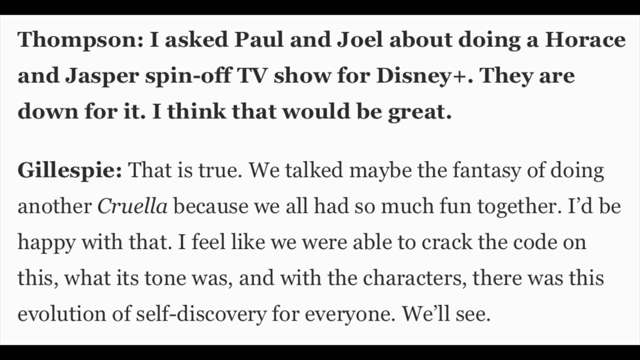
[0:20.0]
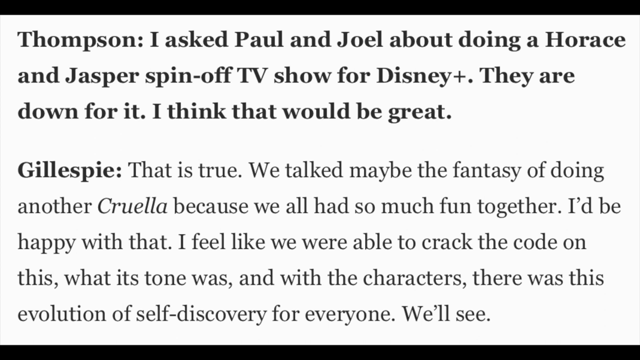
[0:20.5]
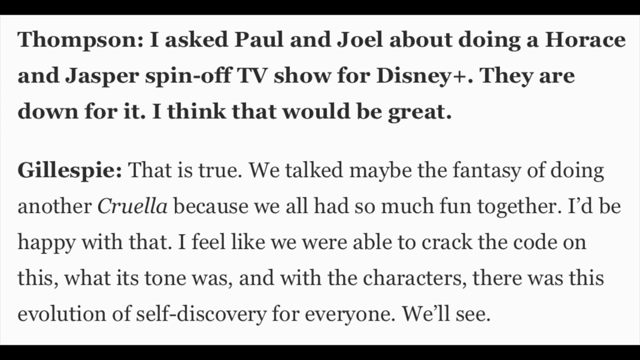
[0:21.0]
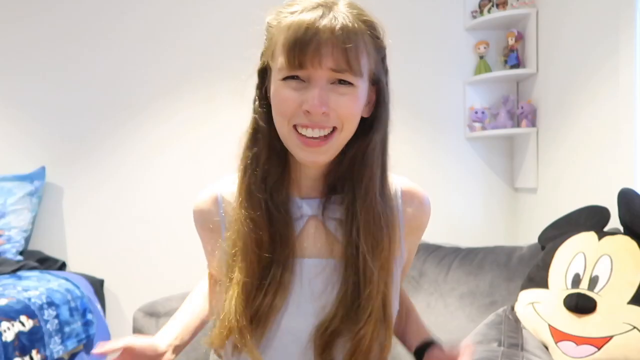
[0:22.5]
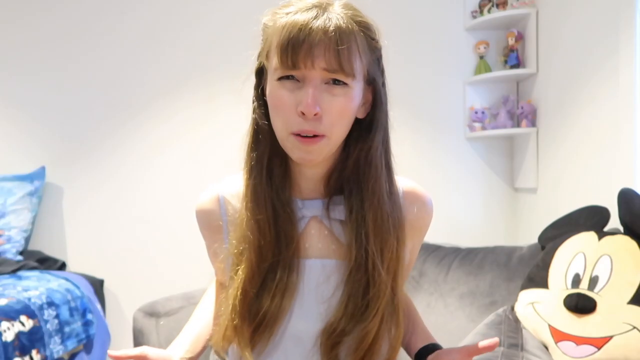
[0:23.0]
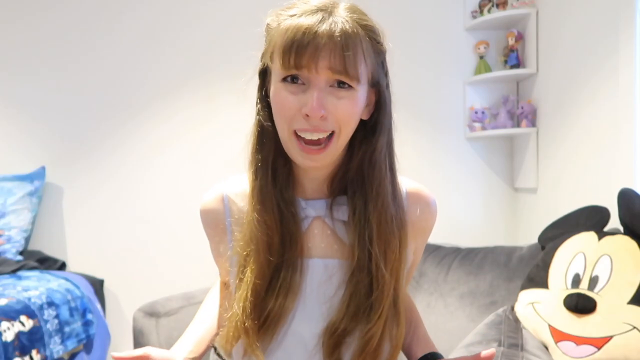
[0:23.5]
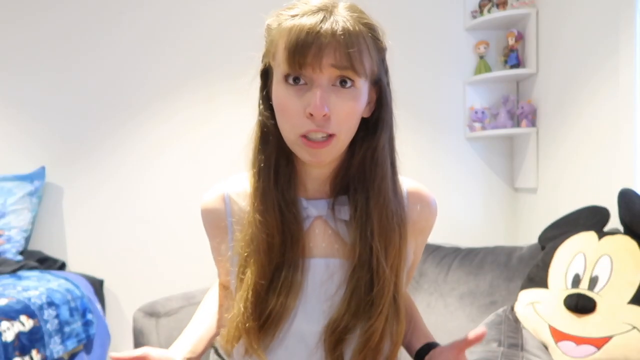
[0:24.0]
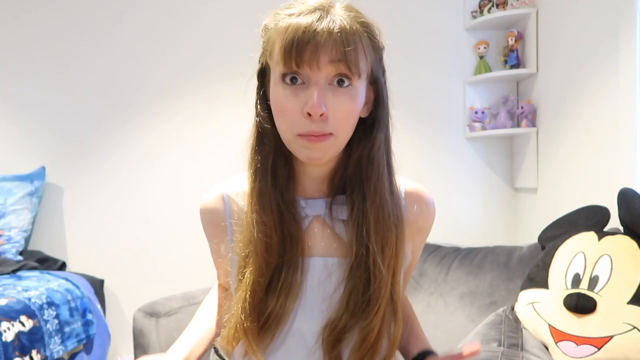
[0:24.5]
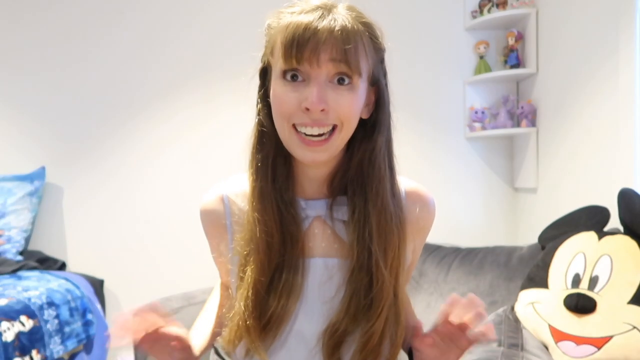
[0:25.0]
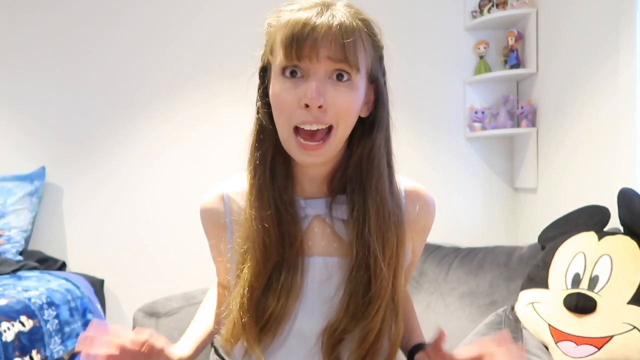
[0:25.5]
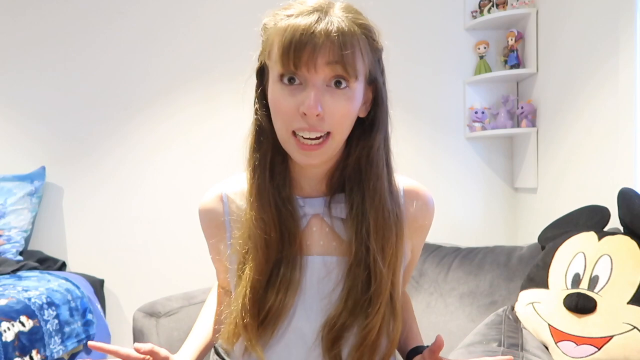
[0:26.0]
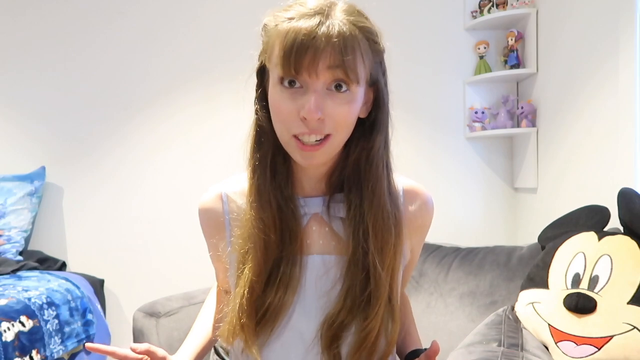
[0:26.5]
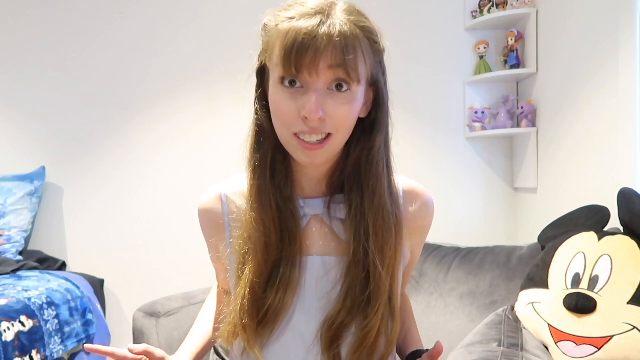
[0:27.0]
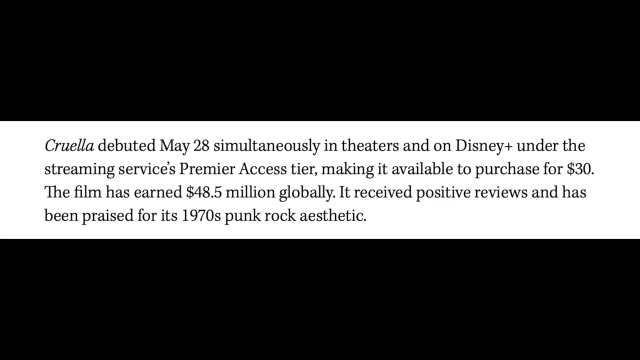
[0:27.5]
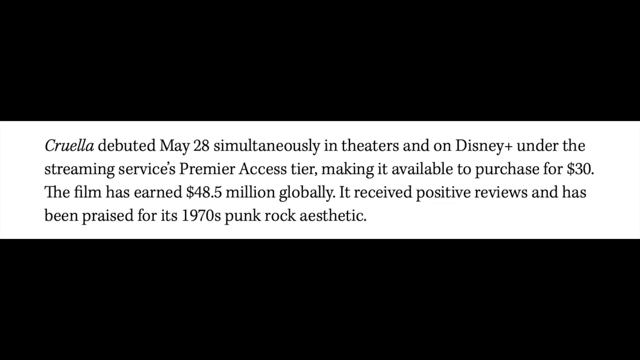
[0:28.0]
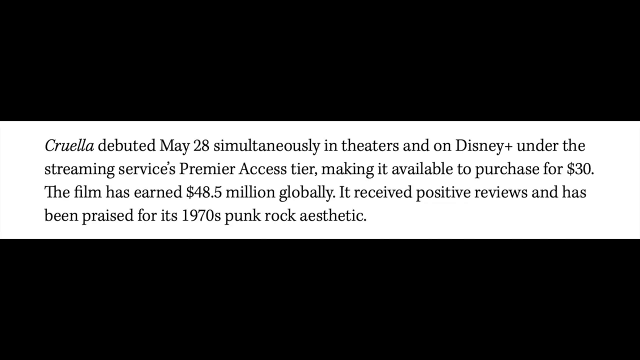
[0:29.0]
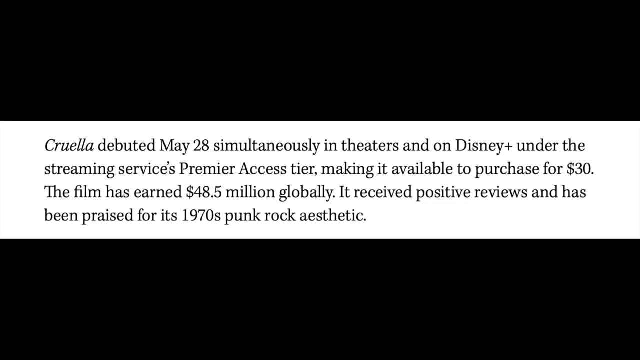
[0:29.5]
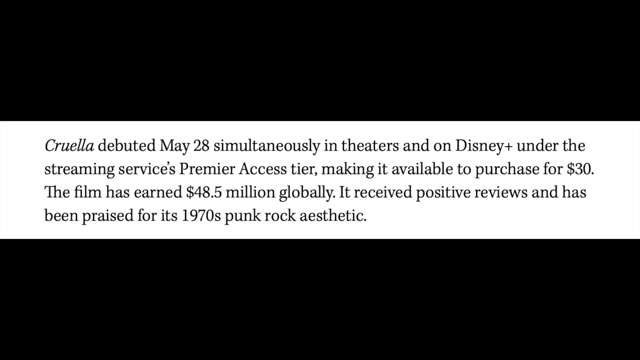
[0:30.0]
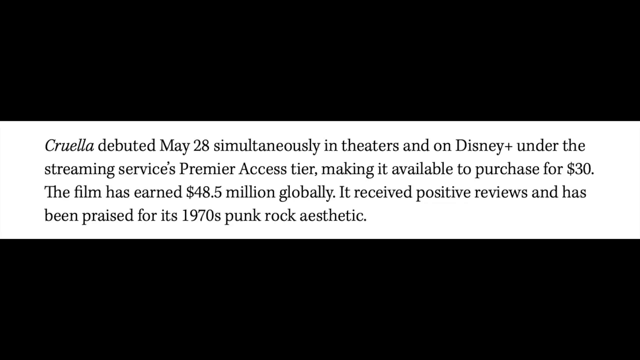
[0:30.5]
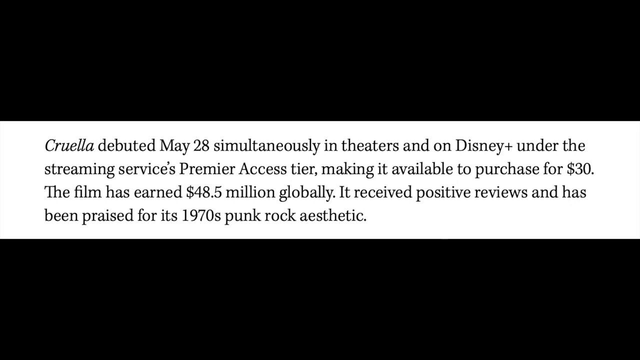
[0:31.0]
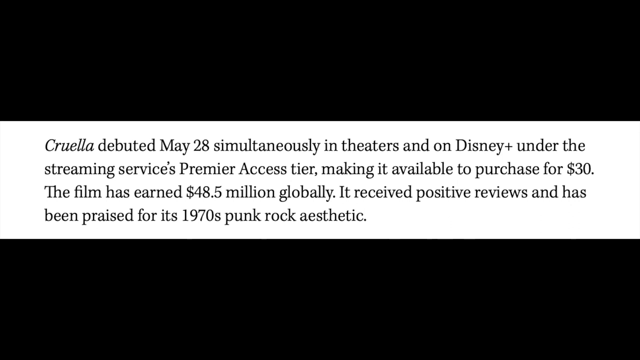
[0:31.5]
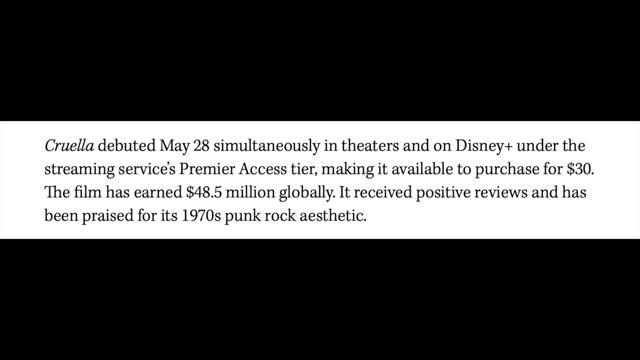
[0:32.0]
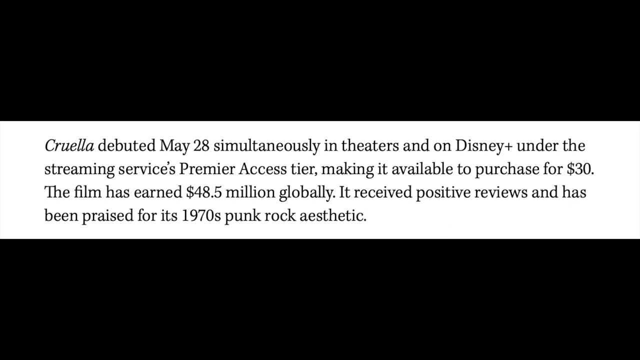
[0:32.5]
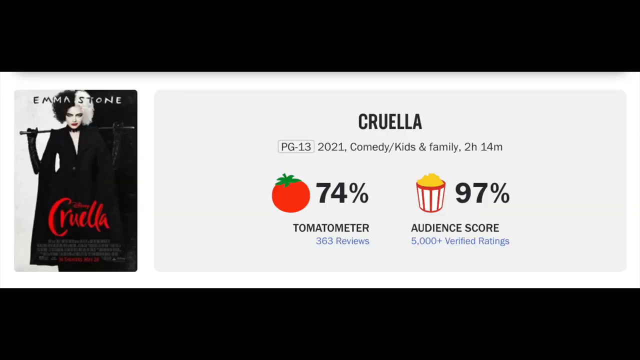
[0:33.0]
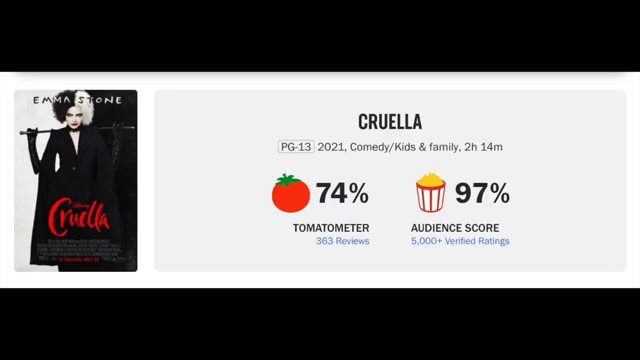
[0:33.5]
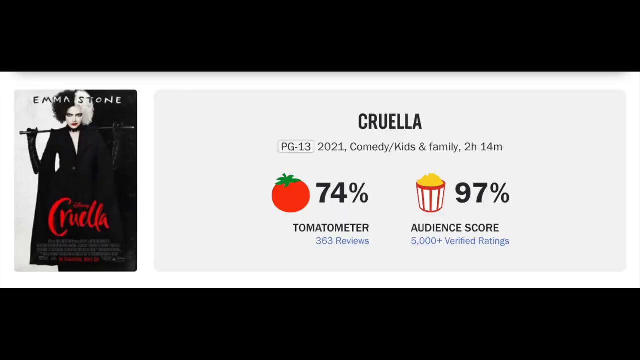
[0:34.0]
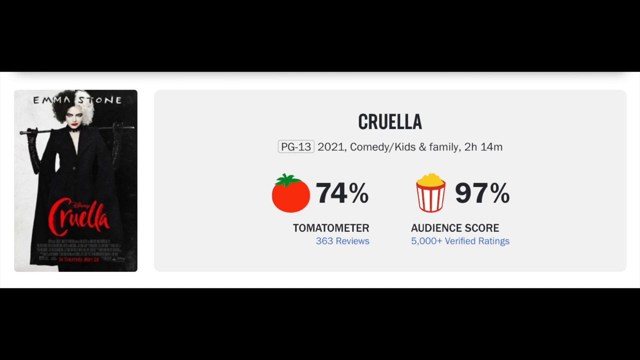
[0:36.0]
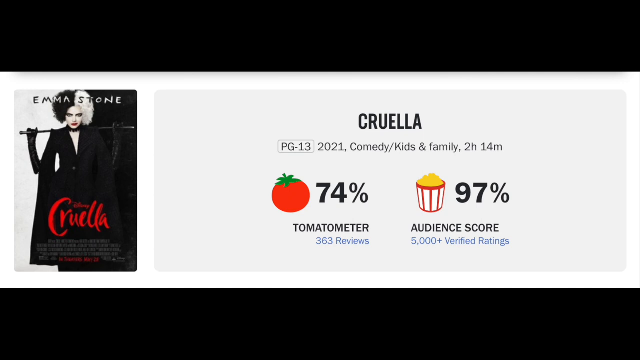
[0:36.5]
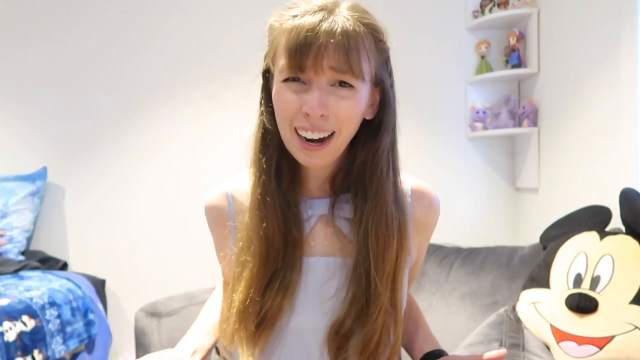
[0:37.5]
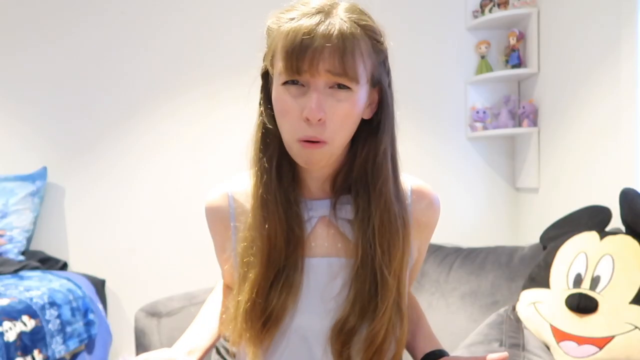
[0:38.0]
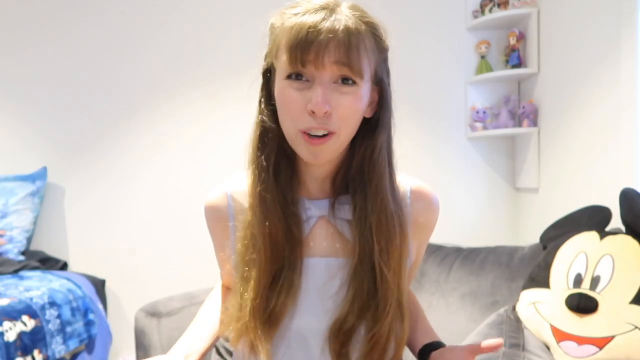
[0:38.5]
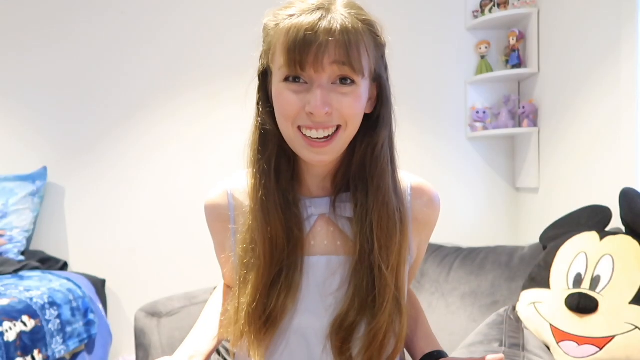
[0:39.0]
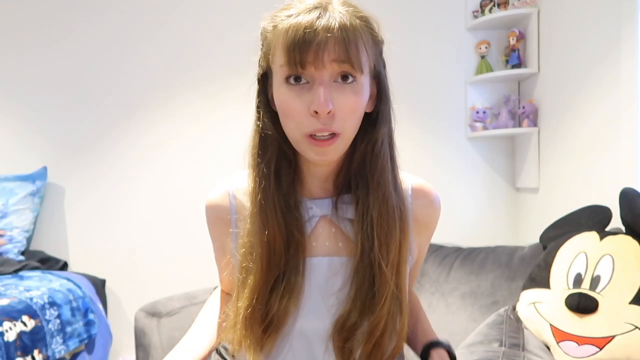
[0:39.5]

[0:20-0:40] A solid white background shows bold text across the screen, beginning at the top with "Thompson: I asked Paul and Joel about doing that." A response attributed to Gillespie follows, beginning "that is true. We talked." The message stays on screen for only a second before the video changes back to the very animated young woman with very long hair, wearing a purple dress with a purple bow at the neck. She has a very disapproving look on her face, her arms pulled back tightly behind her back so they are barely visible. Her head wobbles fast from side to side, making her hair shake on her bangs, and she stays disapproving the whole time. A message pops up on the screen that says "Cruella debut." A screenshot of a Cruella advertisement then shows it as PG-13, 2021, with a Rotten Tomatoes score of 74% and an audience score of 97%. The woman comes back on, her head bobbing side to side very fast.